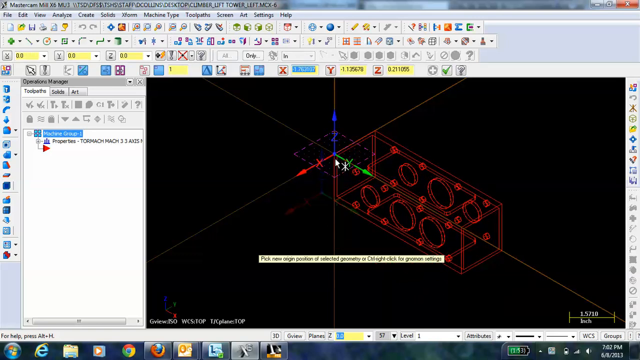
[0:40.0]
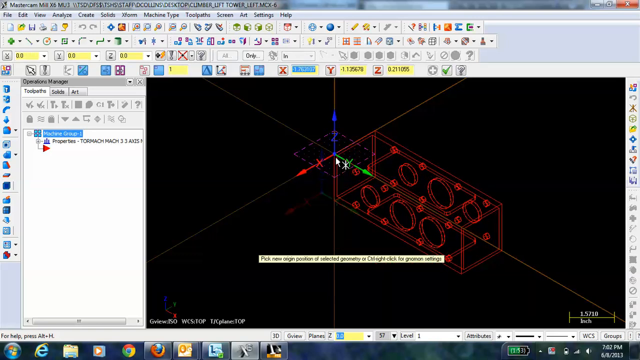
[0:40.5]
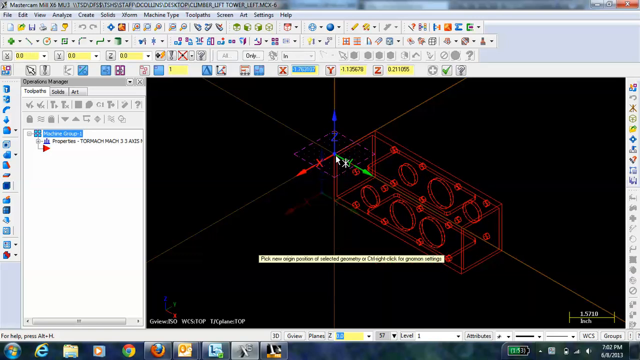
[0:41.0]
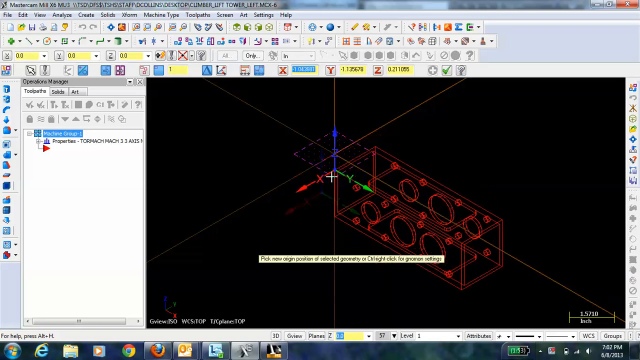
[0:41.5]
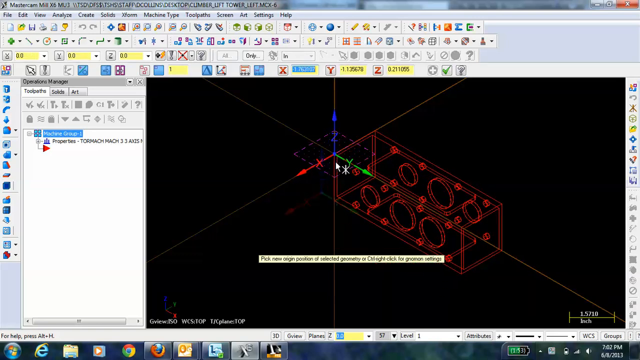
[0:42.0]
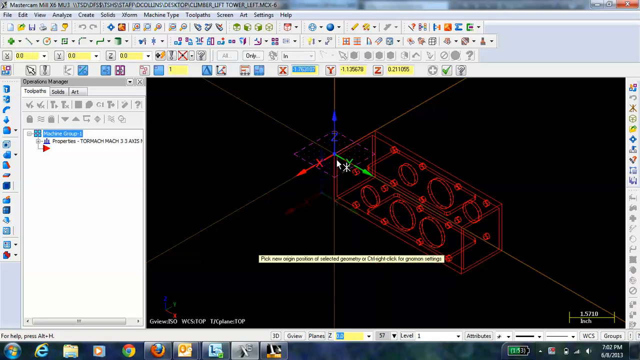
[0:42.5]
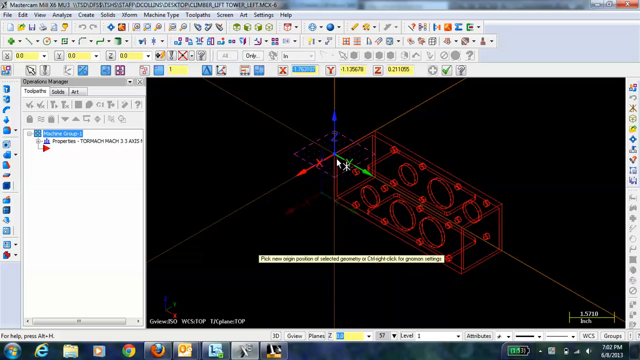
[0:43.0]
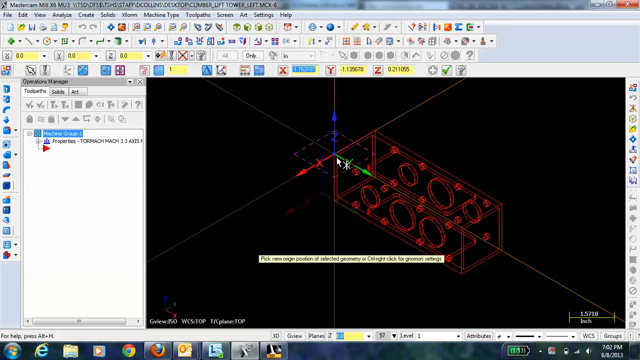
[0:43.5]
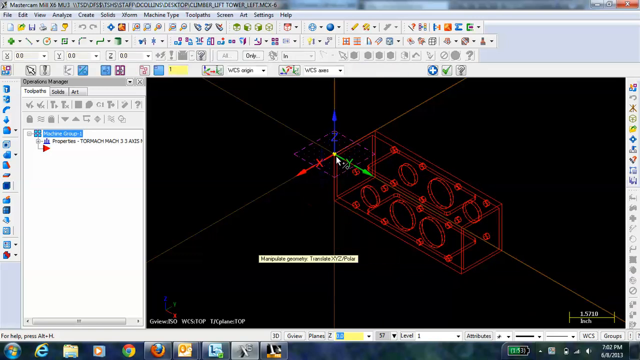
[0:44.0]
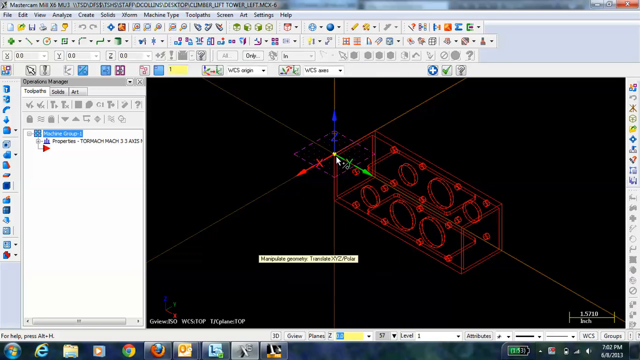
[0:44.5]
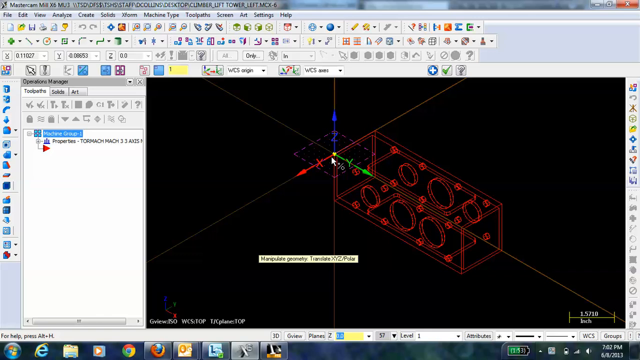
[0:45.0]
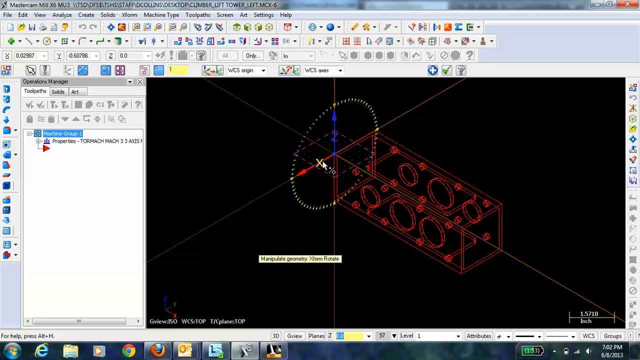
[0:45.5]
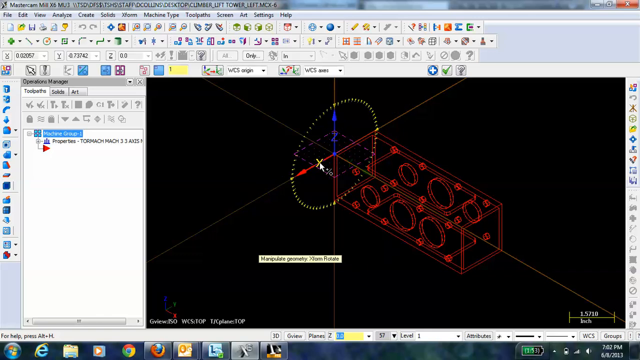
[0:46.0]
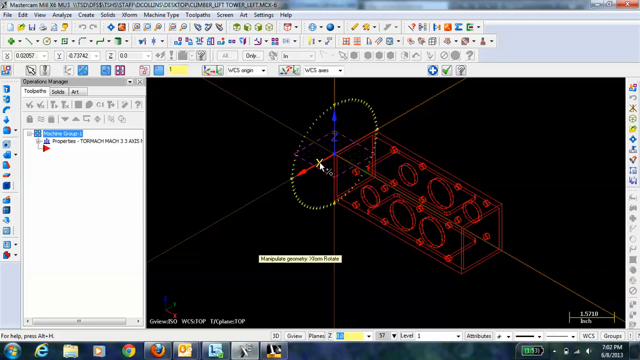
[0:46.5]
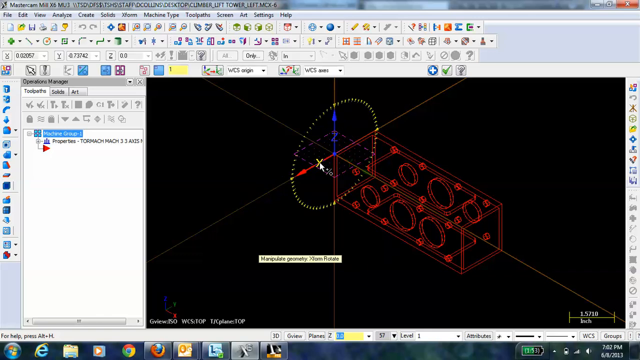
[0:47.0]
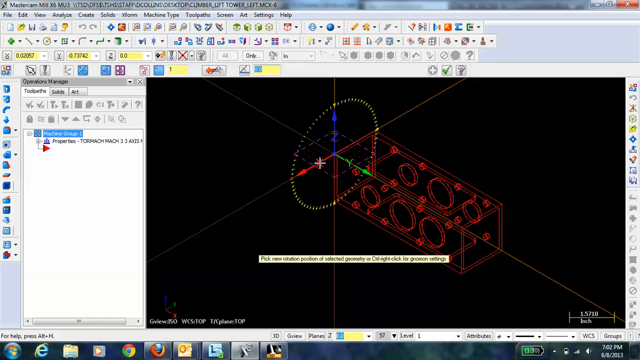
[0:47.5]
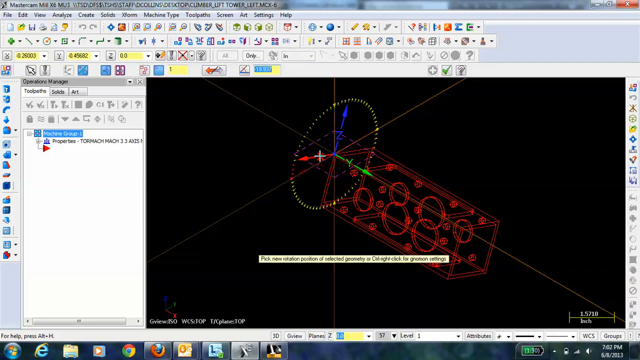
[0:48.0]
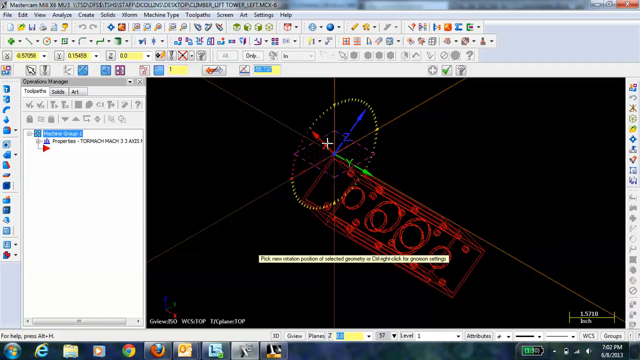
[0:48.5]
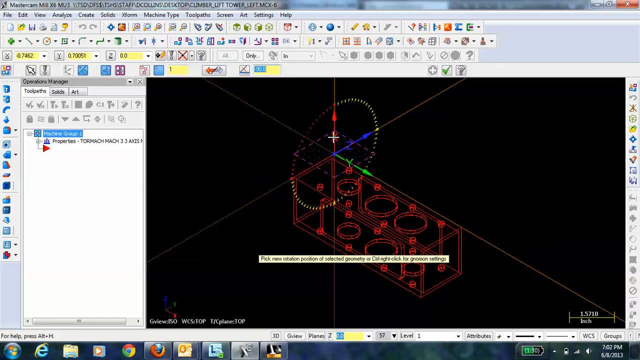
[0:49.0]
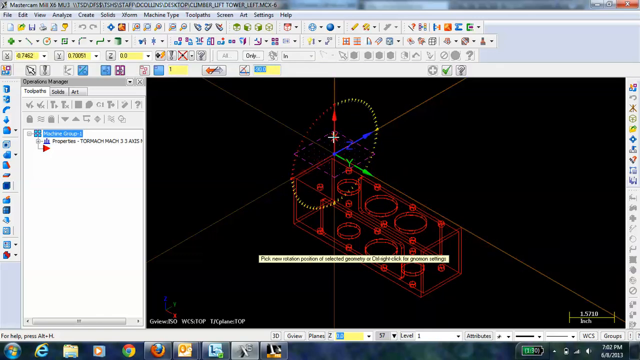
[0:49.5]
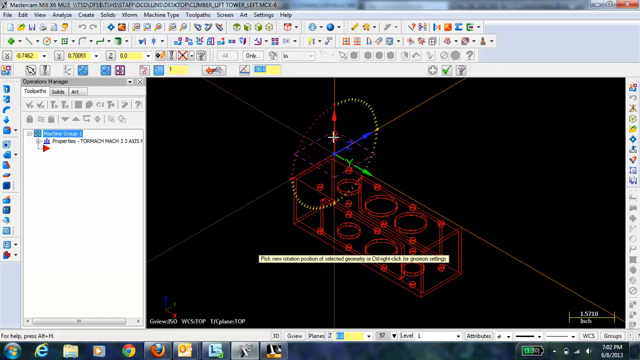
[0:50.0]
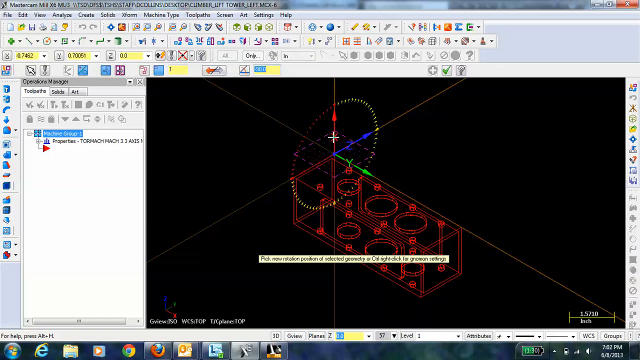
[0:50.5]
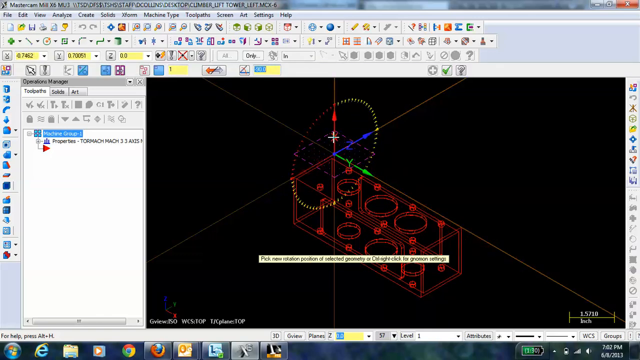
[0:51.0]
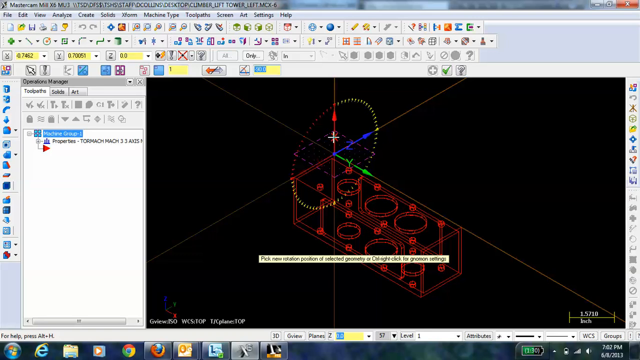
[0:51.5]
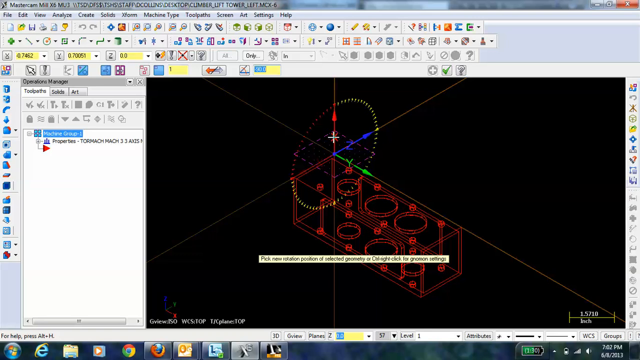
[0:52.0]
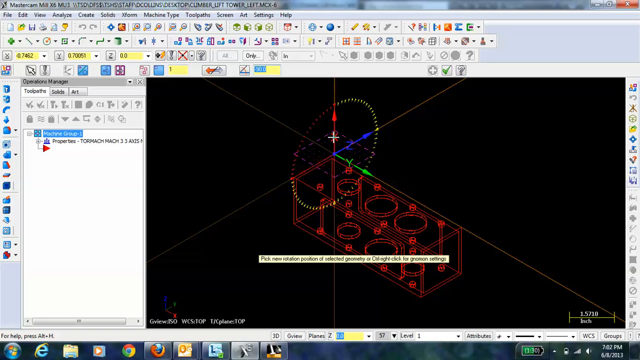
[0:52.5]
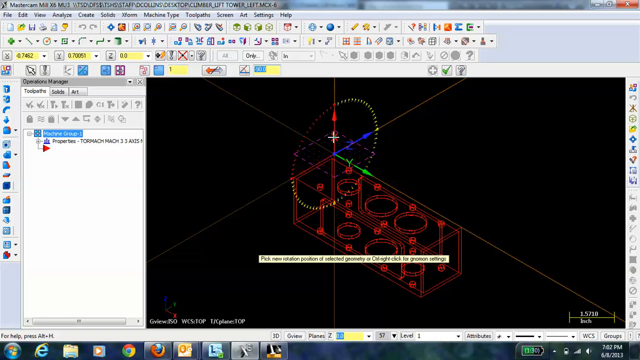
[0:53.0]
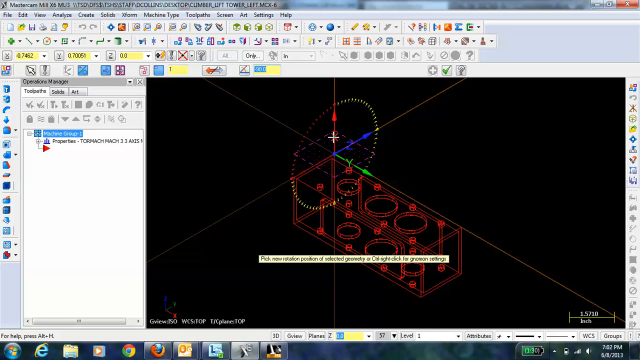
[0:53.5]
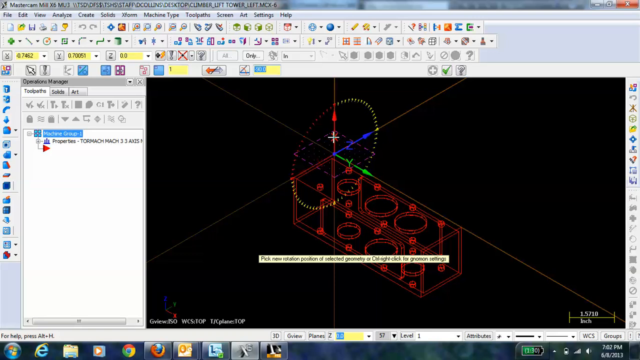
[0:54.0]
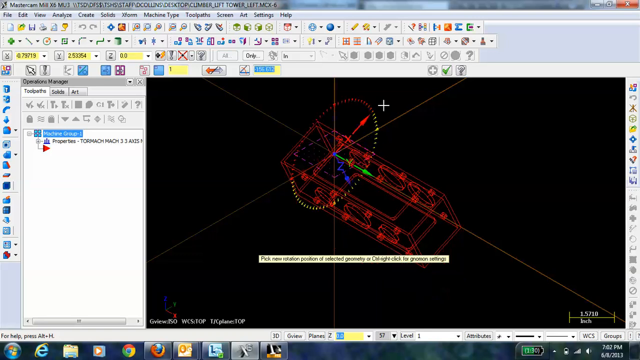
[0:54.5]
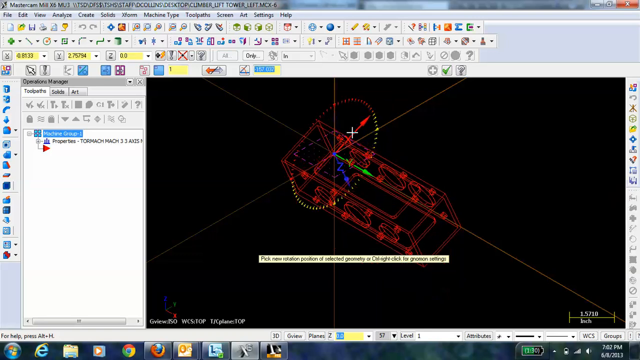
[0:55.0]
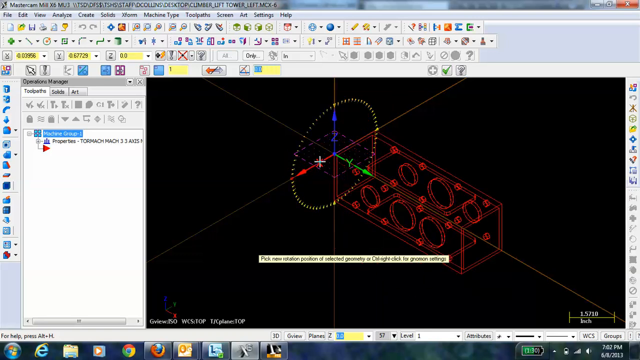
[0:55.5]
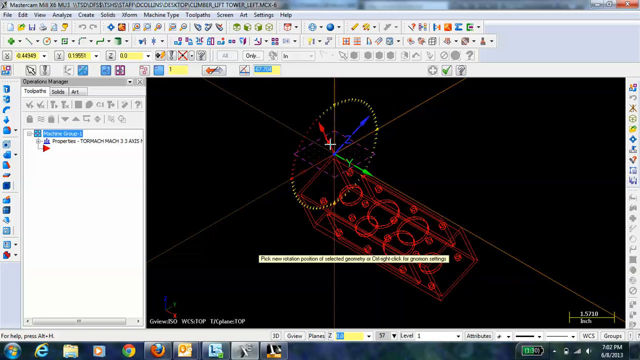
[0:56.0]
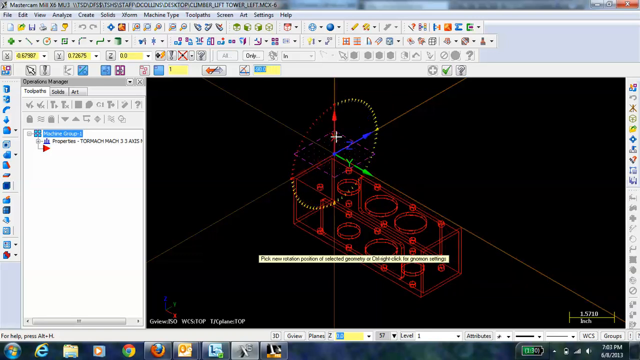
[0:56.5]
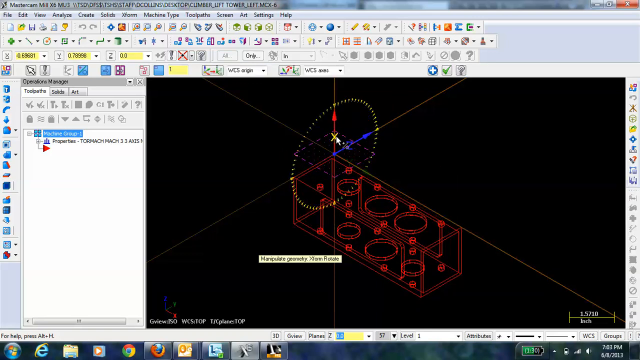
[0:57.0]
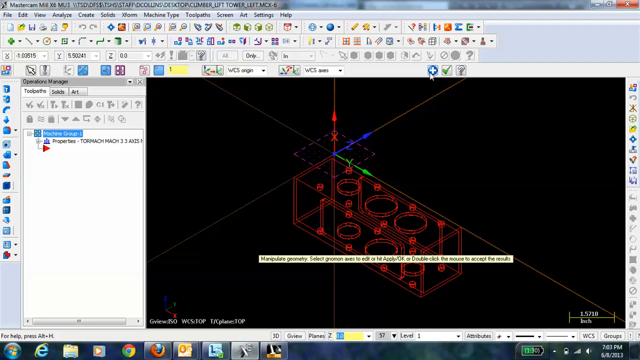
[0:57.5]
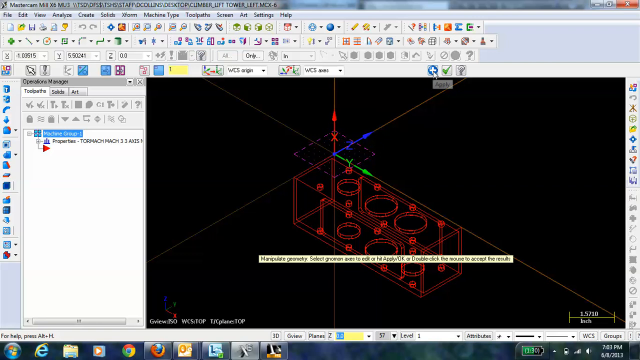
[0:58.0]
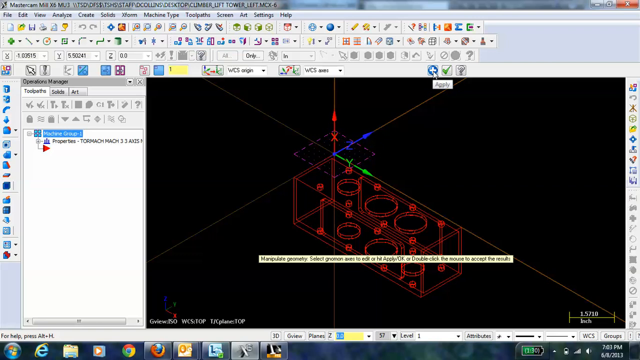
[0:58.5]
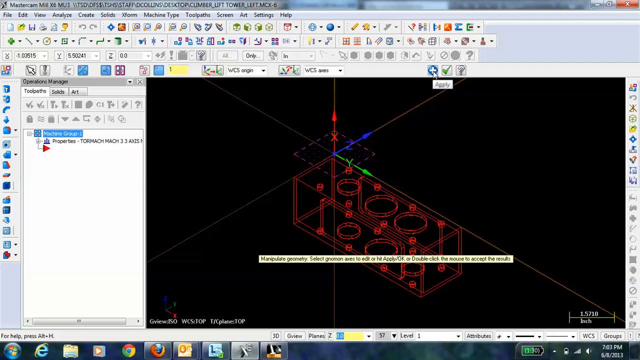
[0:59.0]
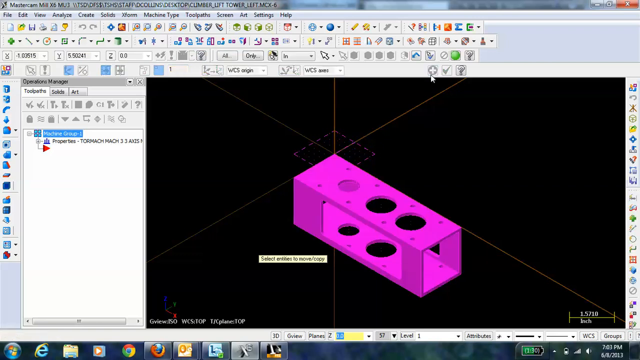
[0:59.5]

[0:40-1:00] The box is red again, and the X, Y, Z axis is being manipulated: it is brought down on the Z axis and then up again to the initial point. He clicks the initial point twice; the first click brings up the meter, and the next brings up the round circular rotation control. He rotates the entire object around, apparently clockwise, rotates it a little bit more, and then rotates it back again. While rotating, he overshoots a little and then comes back to where it is parallel with the z-axis. He clicks the object again, and it becomes a hot pink color. These transformations happen very quickly, with him clicking through the options on that page.